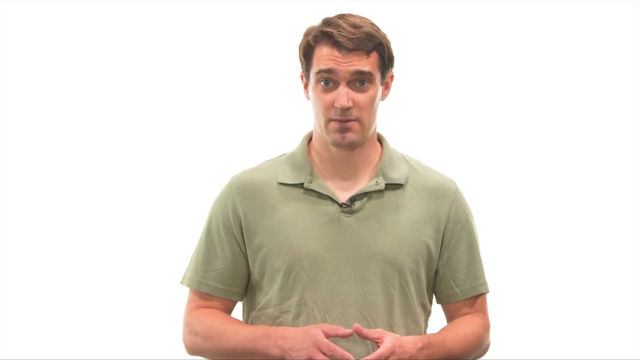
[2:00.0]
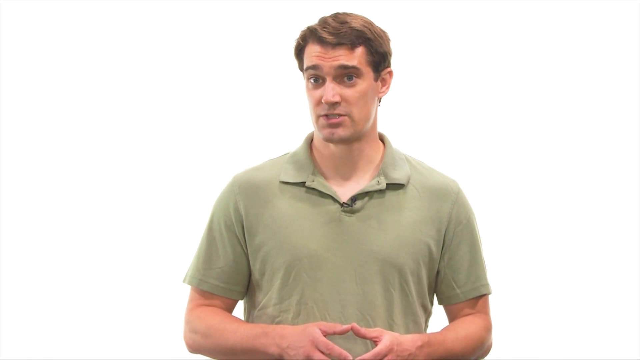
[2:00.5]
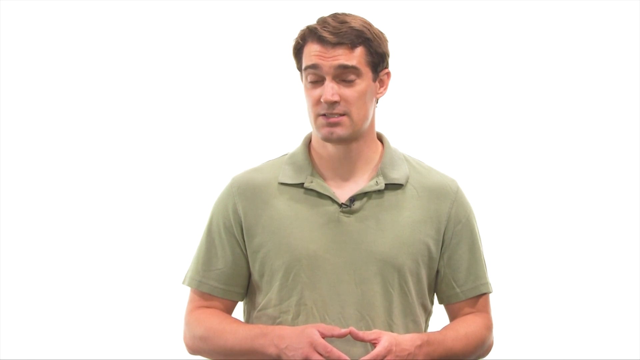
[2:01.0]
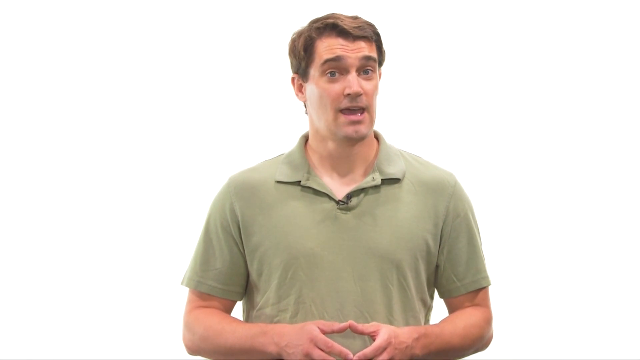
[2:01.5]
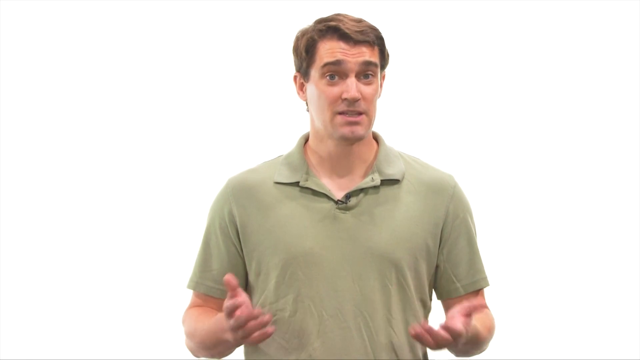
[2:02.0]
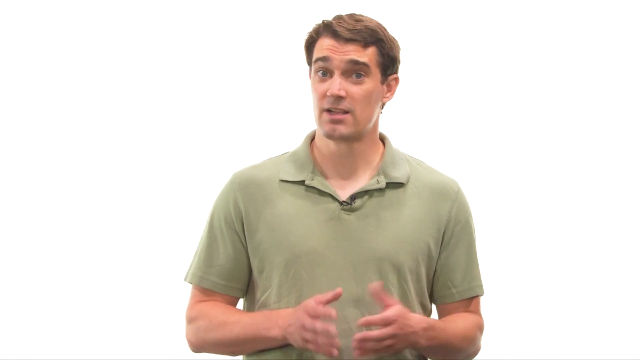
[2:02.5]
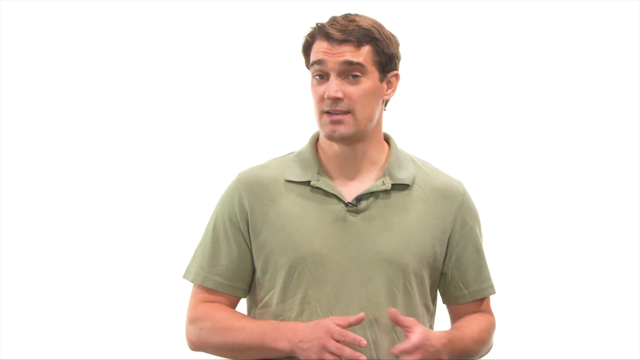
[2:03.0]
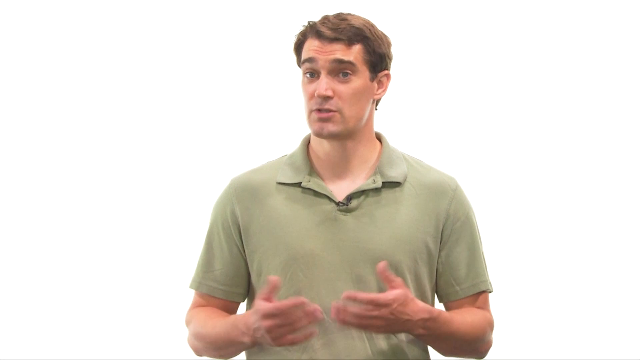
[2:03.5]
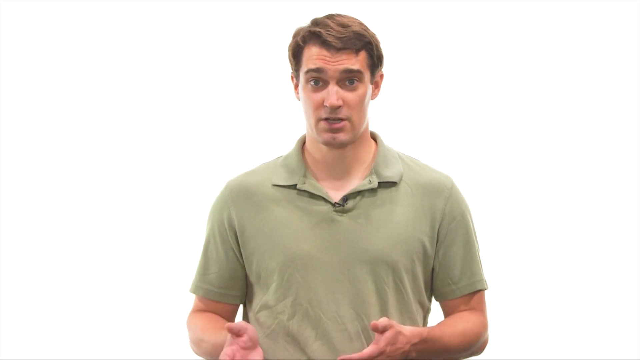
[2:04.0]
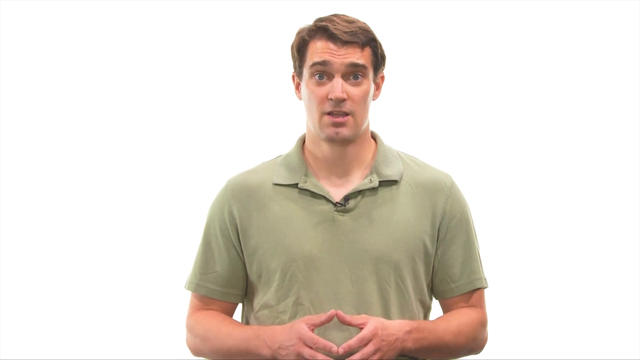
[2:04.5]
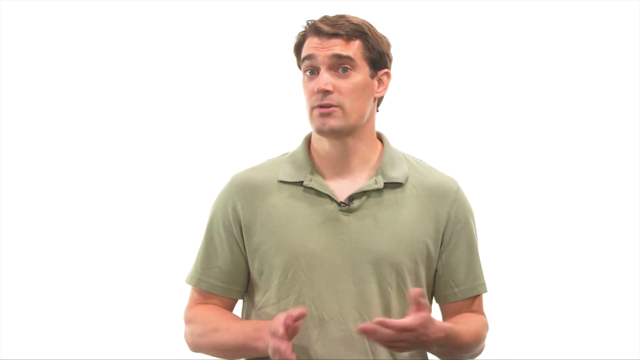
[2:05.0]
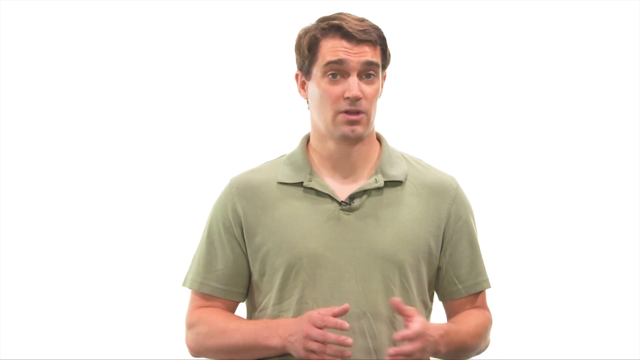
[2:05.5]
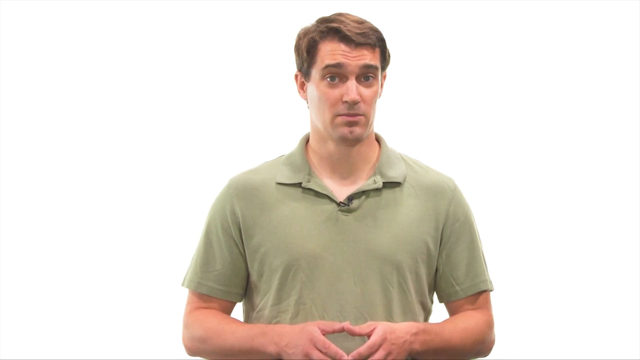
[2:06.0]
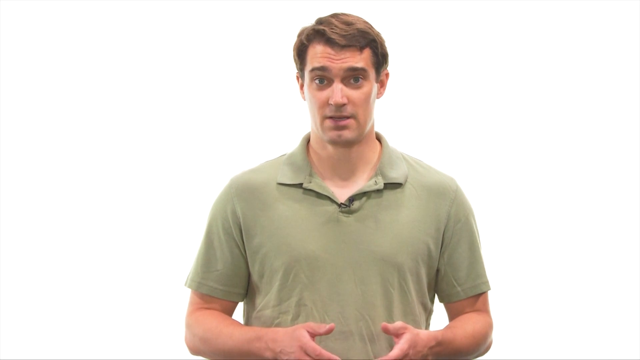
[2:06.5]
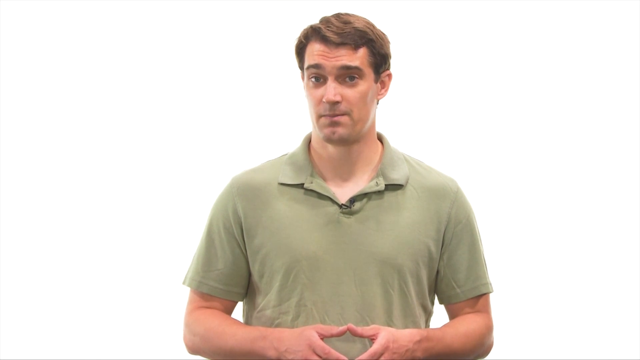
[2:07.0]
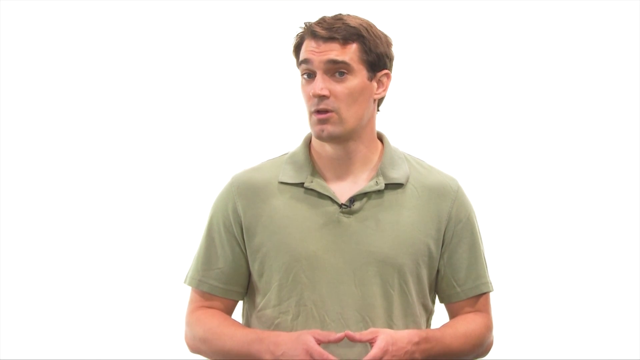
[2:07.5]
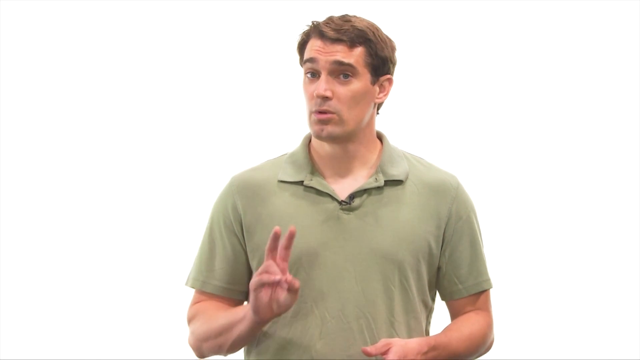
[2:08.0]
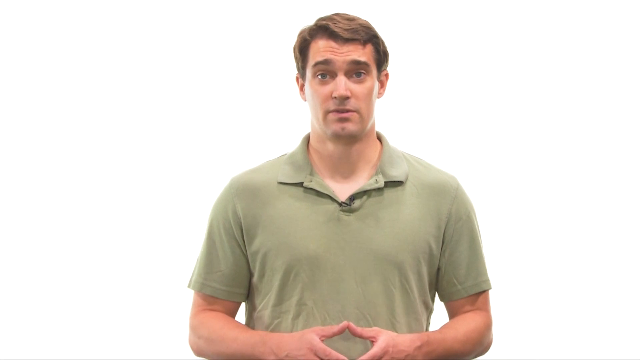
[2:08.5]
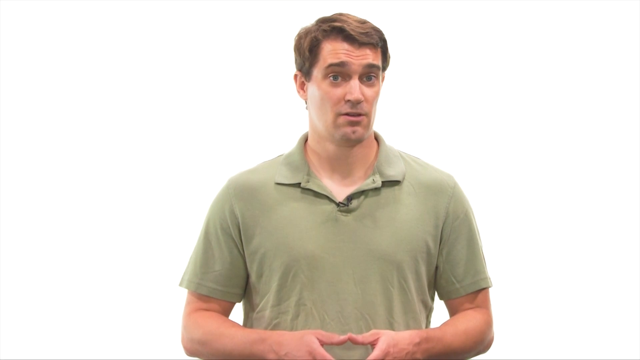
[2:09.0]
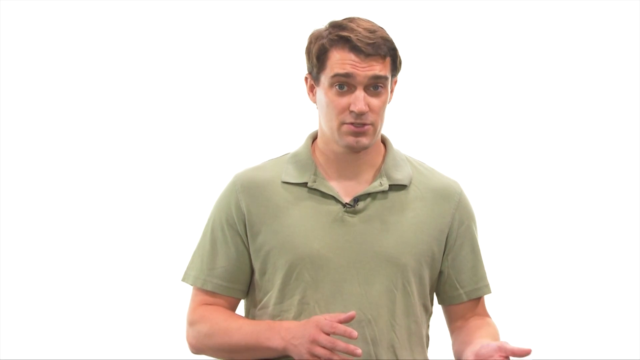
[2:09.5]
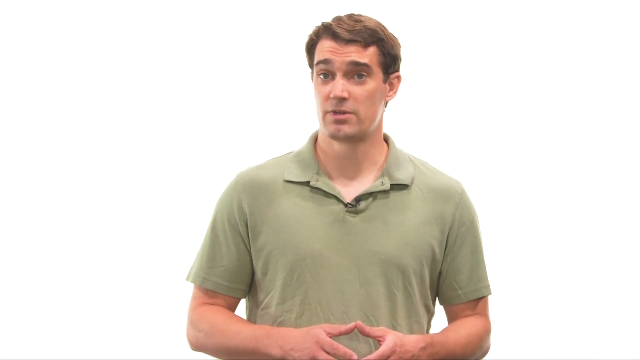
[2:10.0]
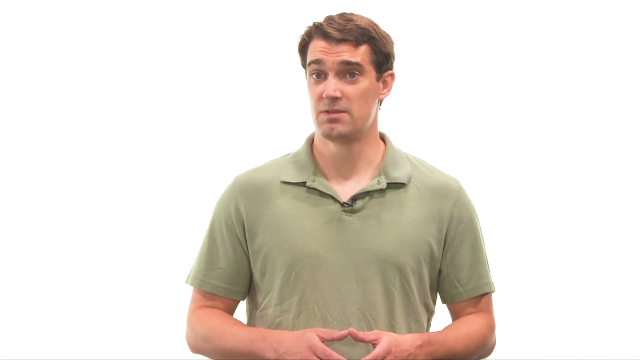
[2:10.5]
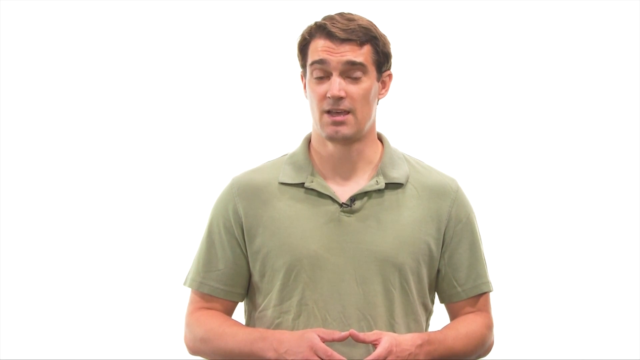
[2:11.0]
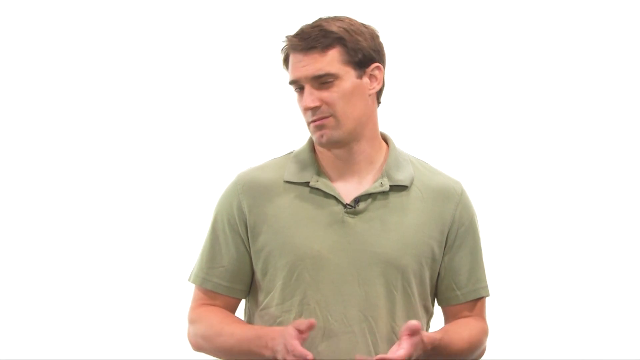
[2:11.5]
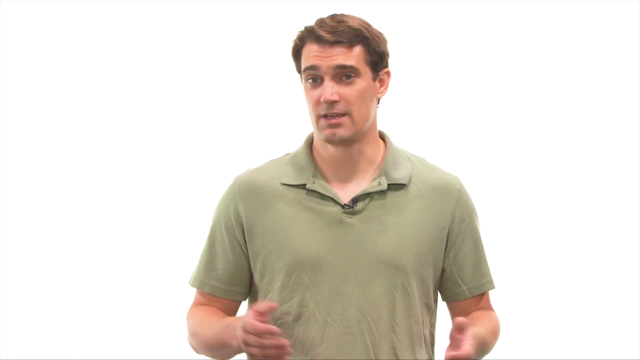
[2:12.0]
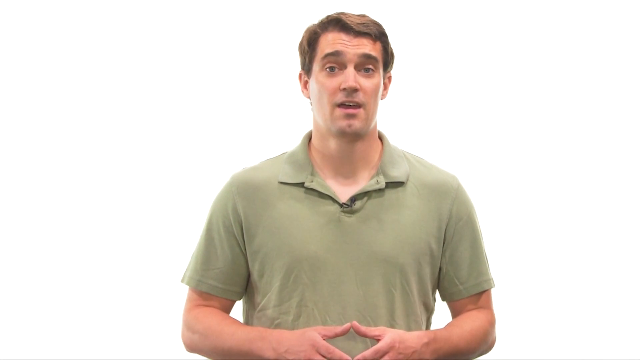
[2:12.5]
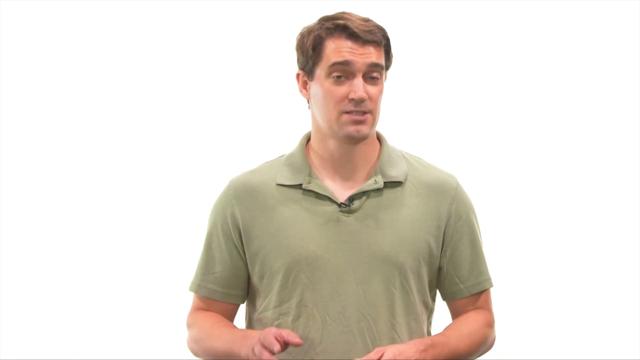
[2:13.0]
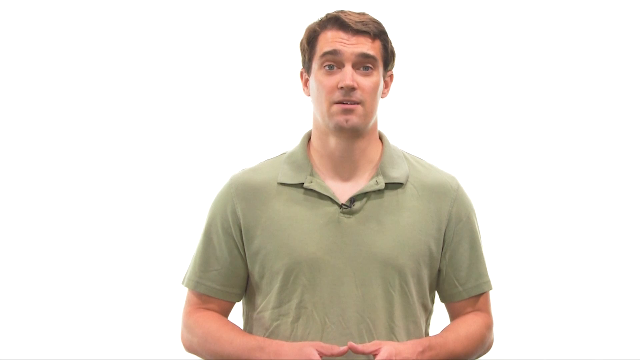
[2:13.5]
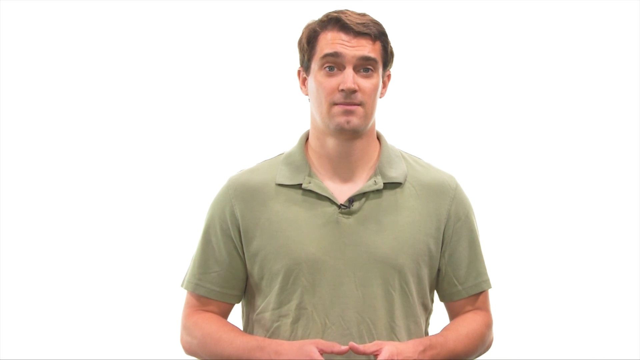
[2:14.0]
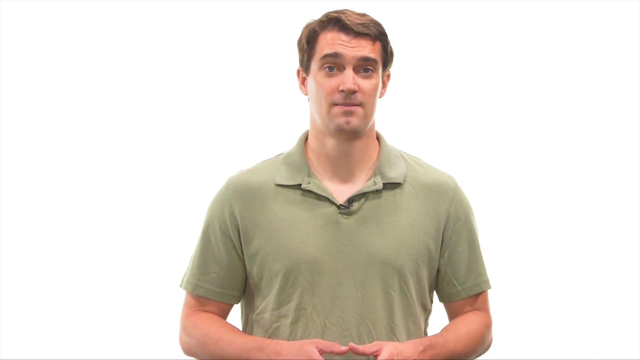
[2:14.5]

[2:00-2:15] The man in the olive shirt is still in the middle of the screen, speaking to the camera with his eyebrows slightly raised. His hands start in the diamond position, then he brings them out in a shrug-like gesture, moving them back and forth out of and into the diamond shape. He brings his right hand up for a split second and holds up two fingers like a peace sign, as if referring to two items. He brings his hands back down and makes slight movements with his head and arms. Near the end he gives a small shrug, then brings his hands back into the diamond position and stops talking.